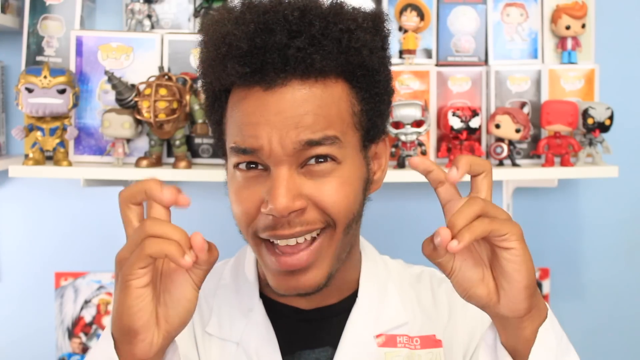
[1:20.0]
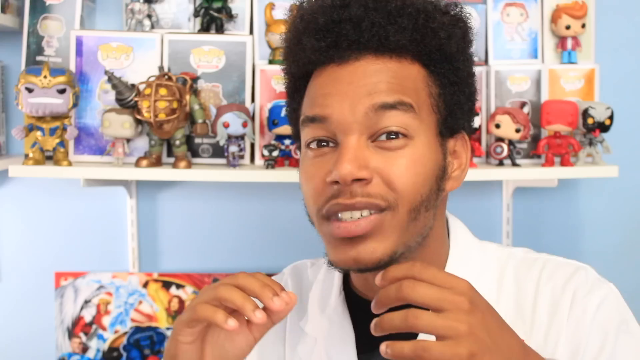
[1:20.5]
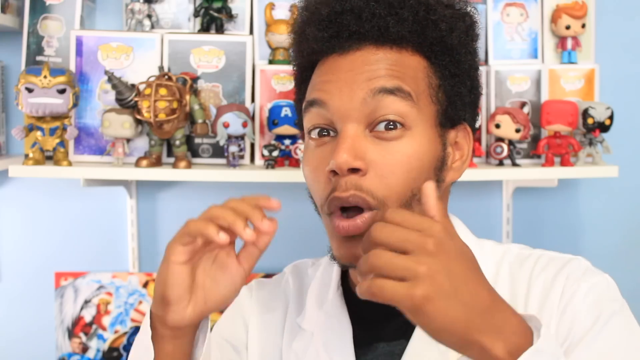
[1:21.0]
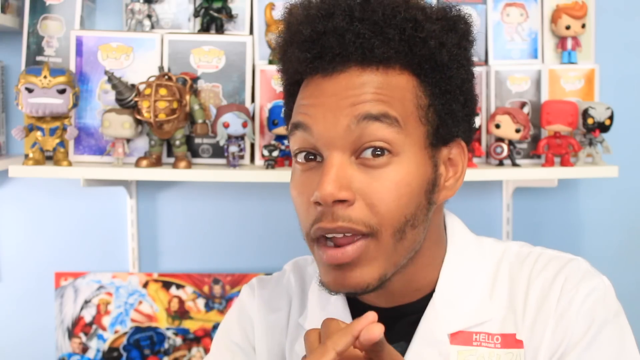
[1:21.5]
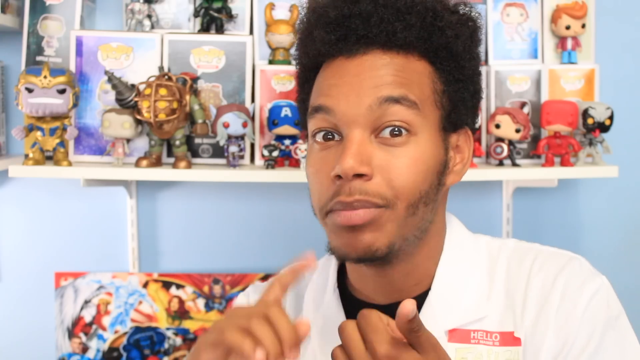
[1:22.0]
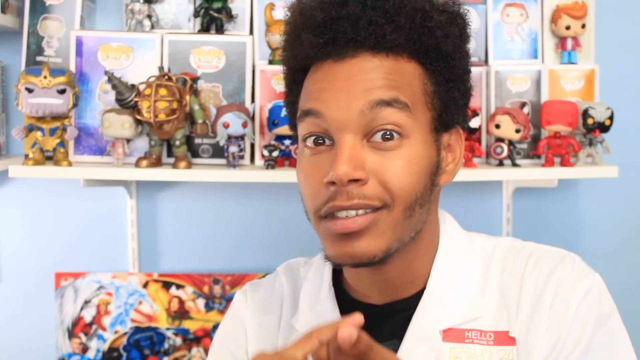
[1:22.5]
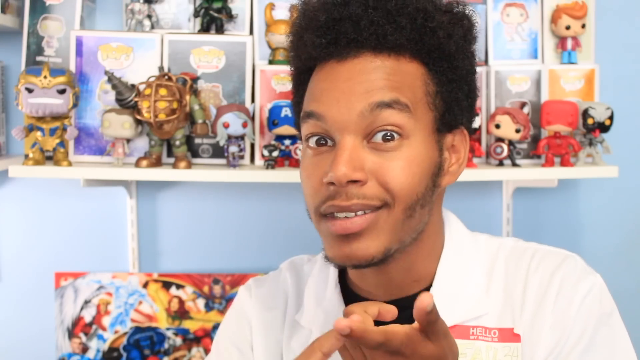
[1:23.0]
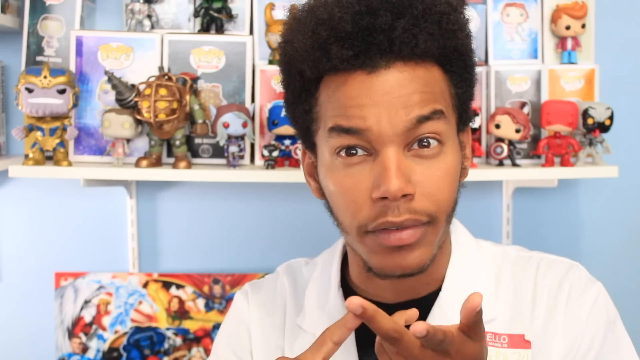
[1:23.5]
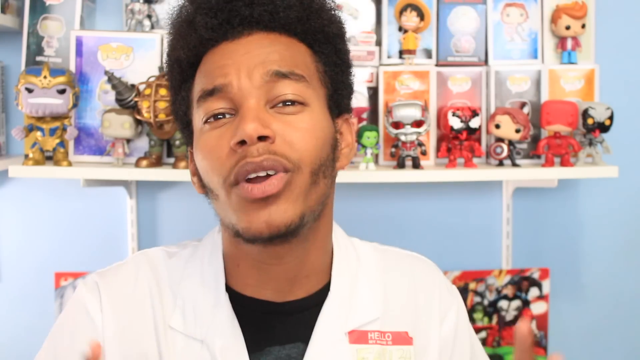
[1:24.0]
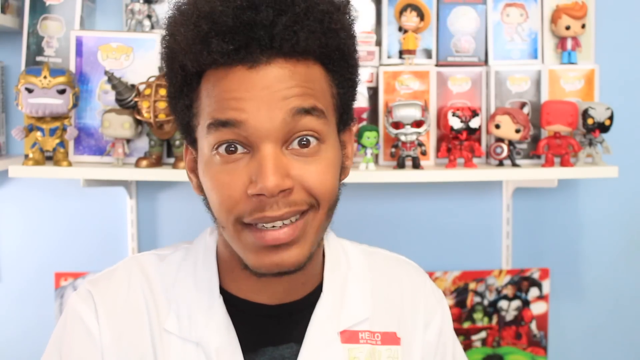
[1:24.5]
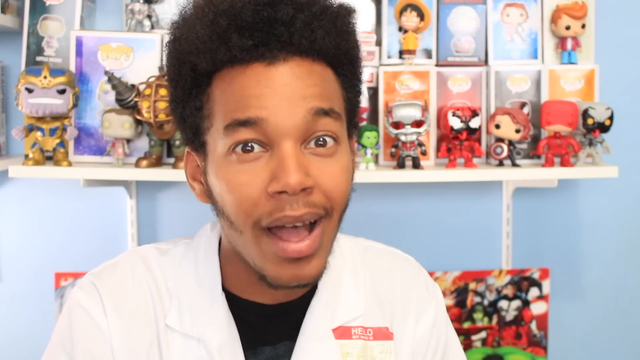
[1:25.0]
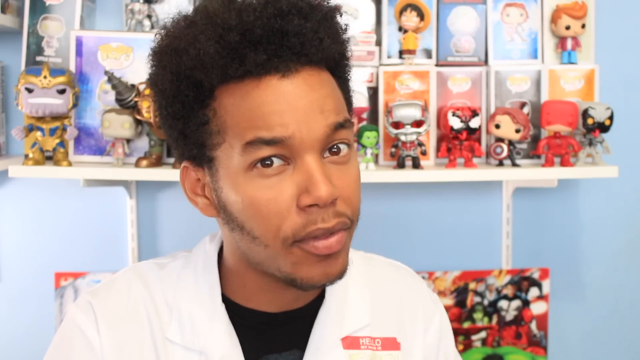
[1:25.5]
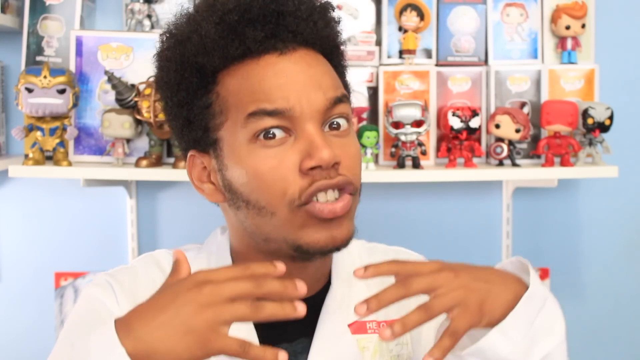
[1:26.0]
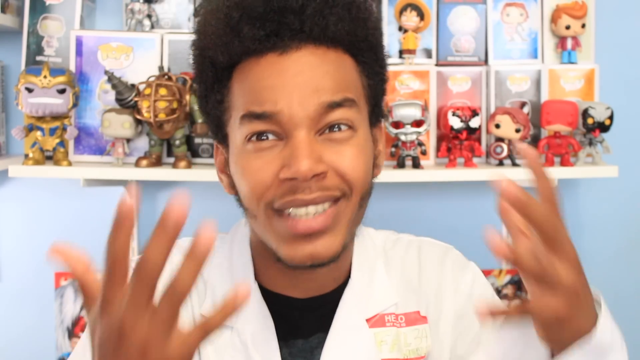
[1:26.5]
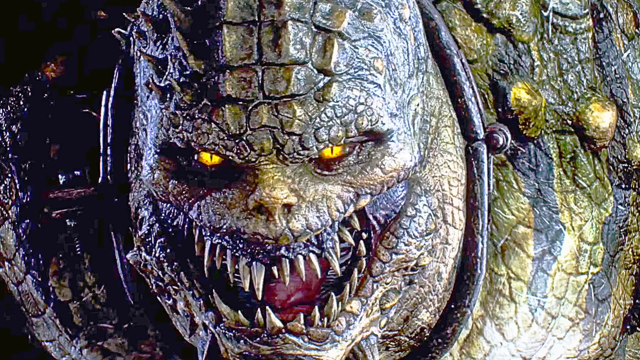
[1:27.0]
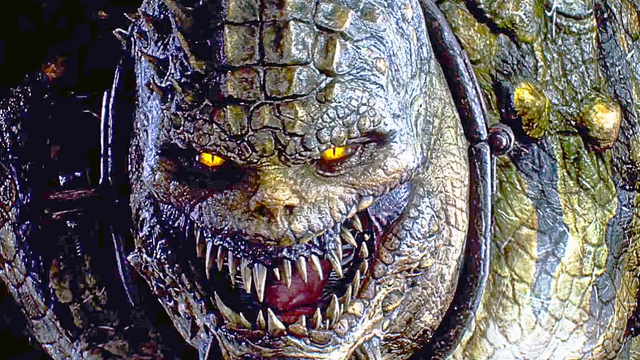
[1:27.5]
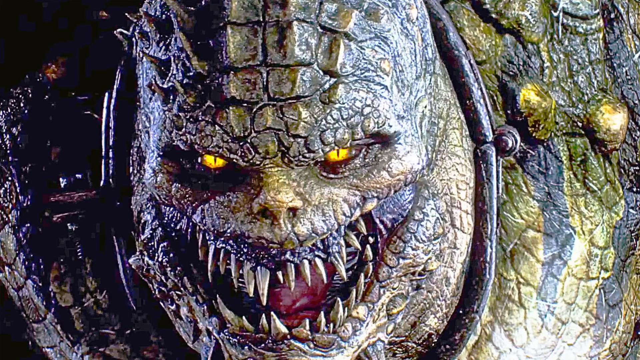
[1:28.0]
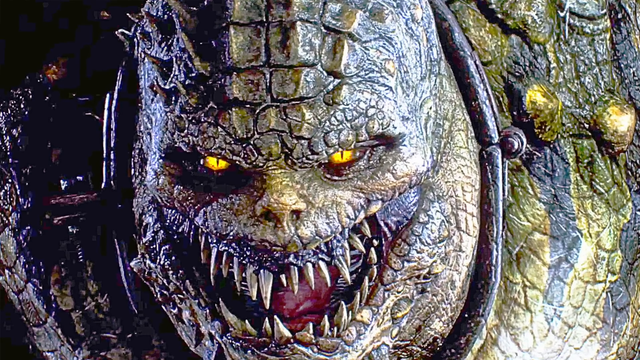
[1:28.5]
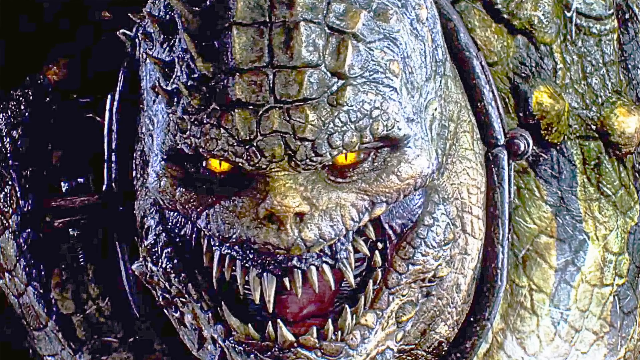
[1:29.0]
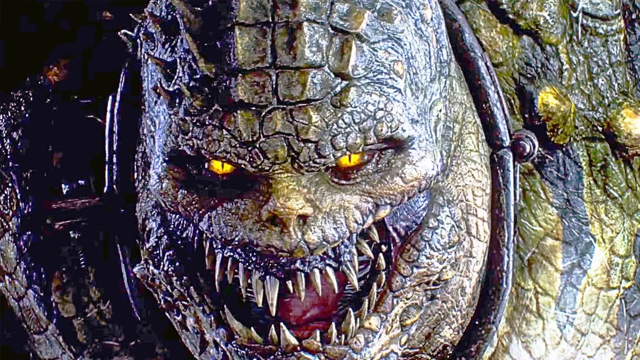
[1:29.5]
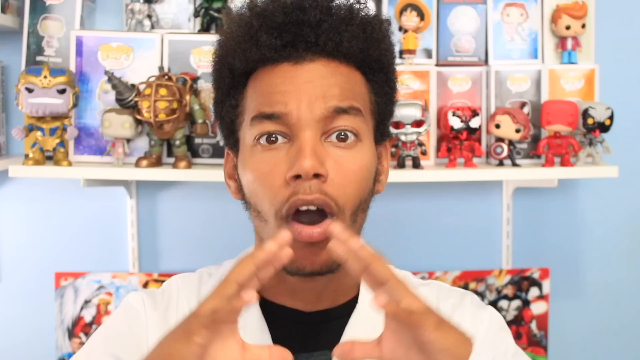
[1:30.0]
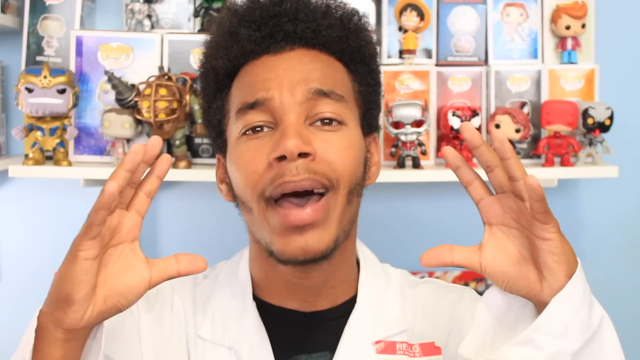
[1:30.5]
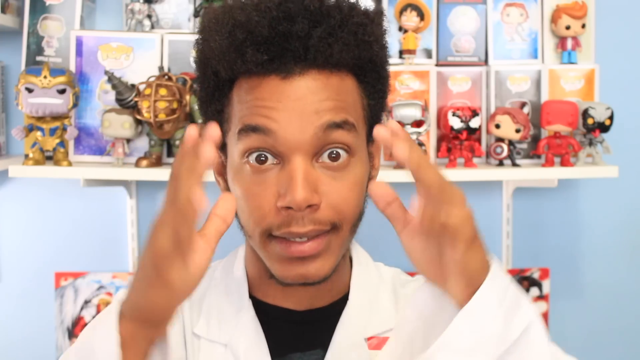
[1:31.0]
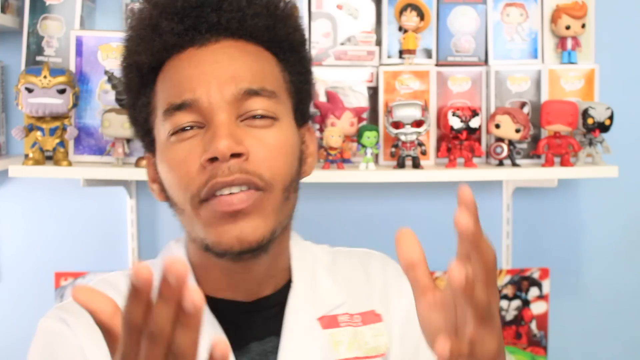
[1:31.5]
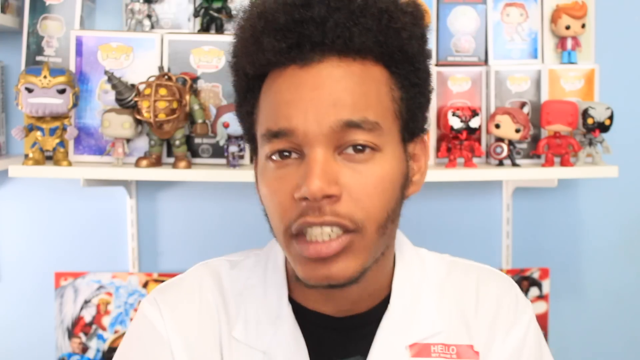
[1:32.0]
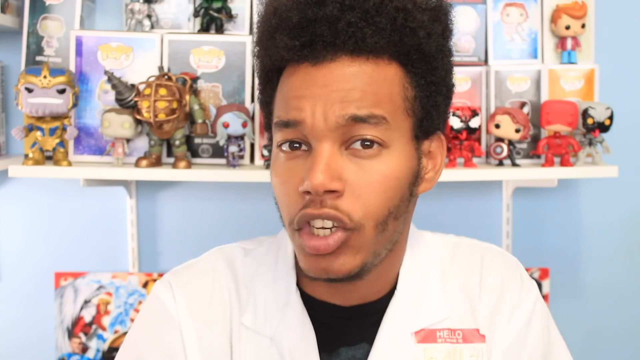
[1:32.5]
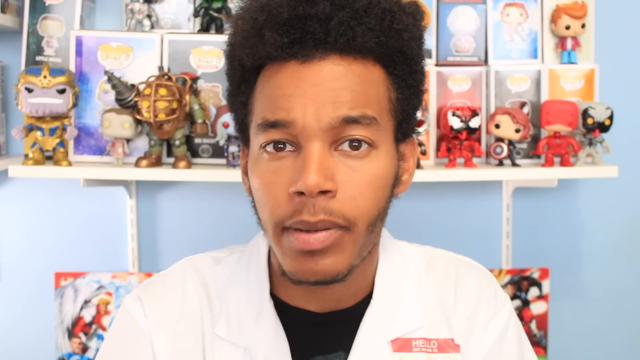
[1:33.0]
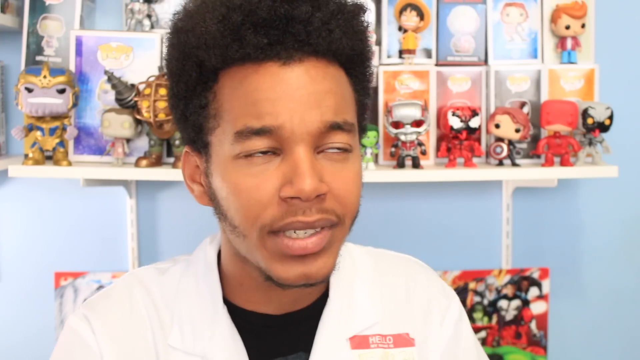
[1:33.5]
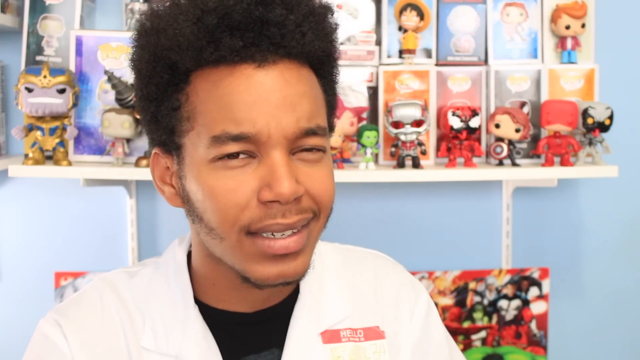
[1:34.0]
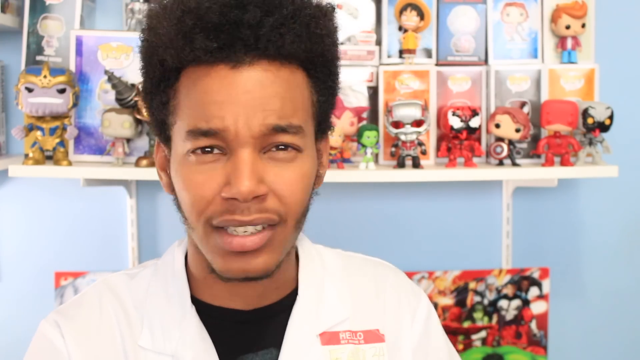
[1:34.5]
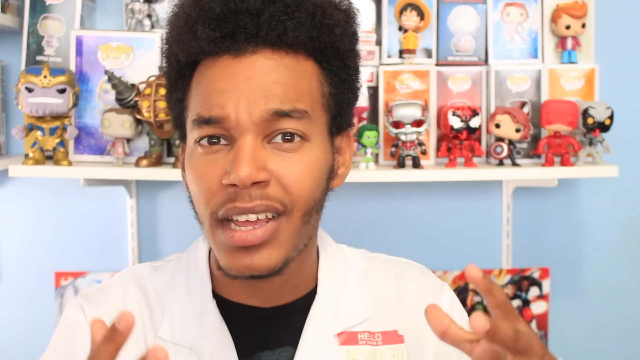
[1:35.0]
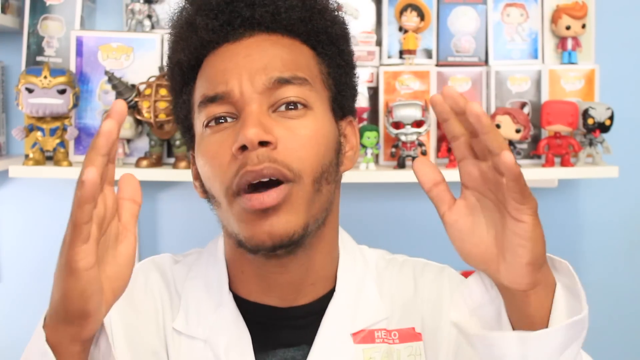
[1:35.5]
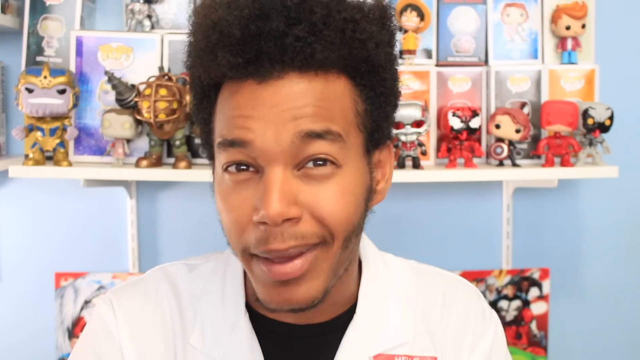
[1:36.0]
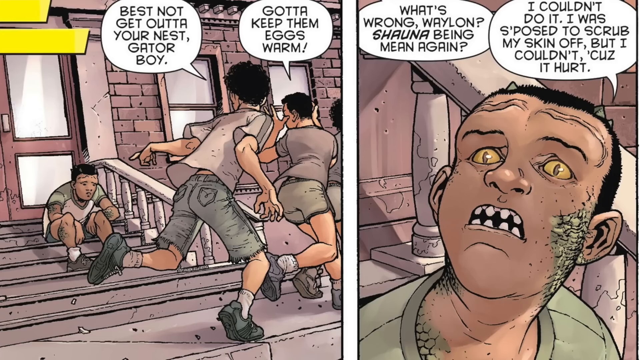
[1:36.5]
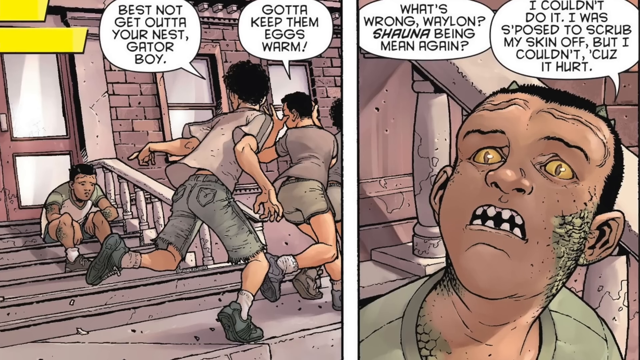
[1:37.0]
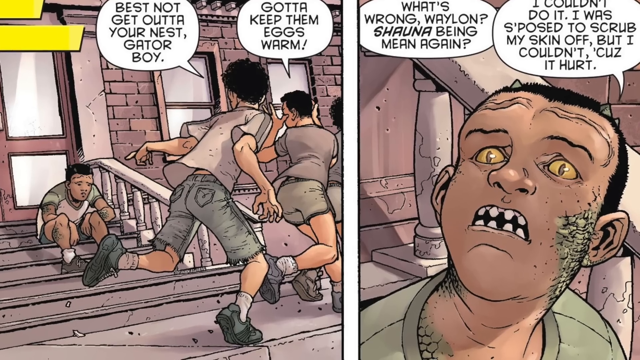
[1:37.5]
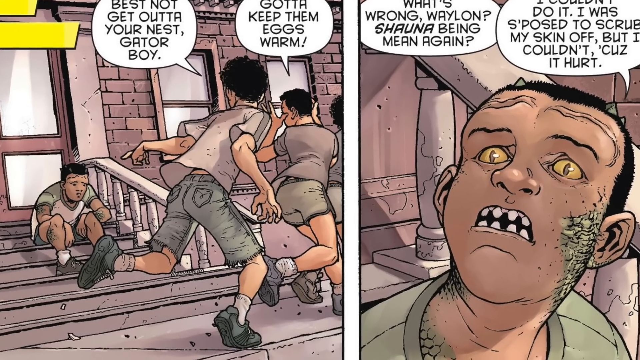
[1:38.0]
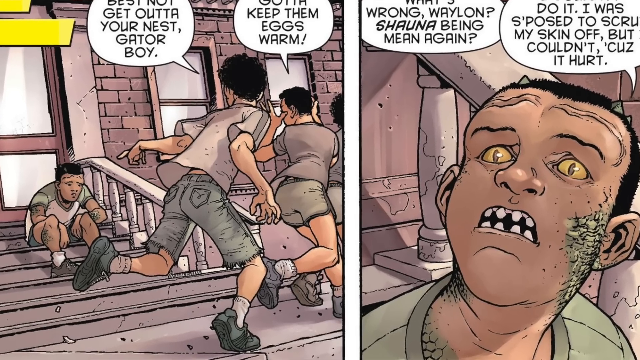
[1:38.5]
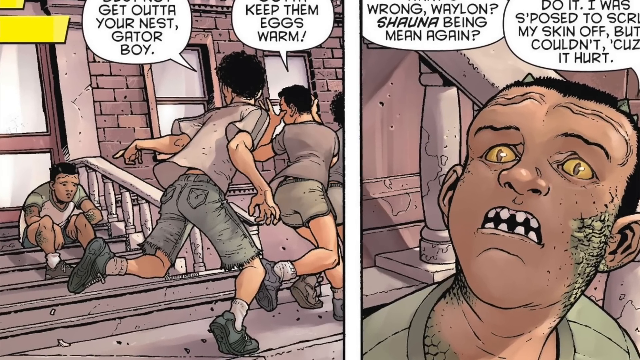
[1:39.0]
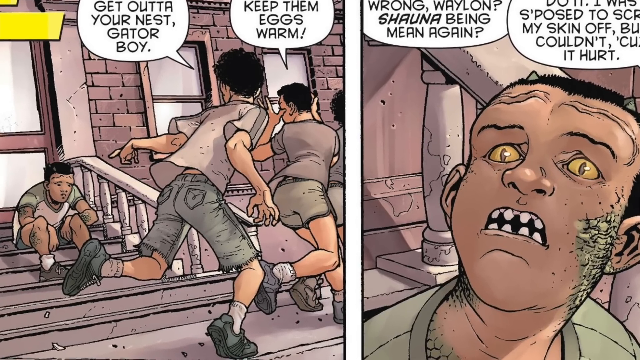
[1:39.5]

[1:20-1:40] The man lifts both hands with two fingers on each raised above the others, smiling as he talks and moving his fingers as if counting. A green monster with long teeth appears; its eyes appear gold. Then an illustration that appears to be in book form shows boys running, with words written to show what they are saying and what is happening. The environment is brown, and a boy is seated on the stairs. The house where the boys are is light brown, and the colors seem toned down. The boys seem to be running away from something.